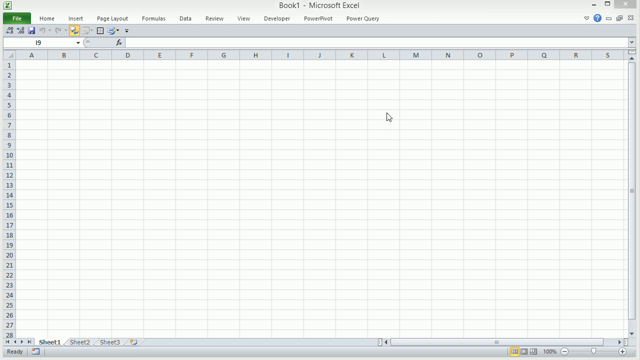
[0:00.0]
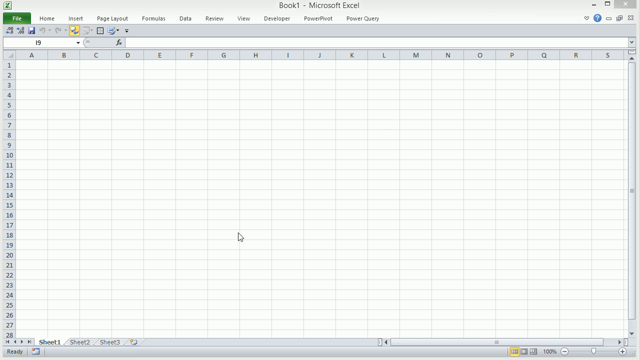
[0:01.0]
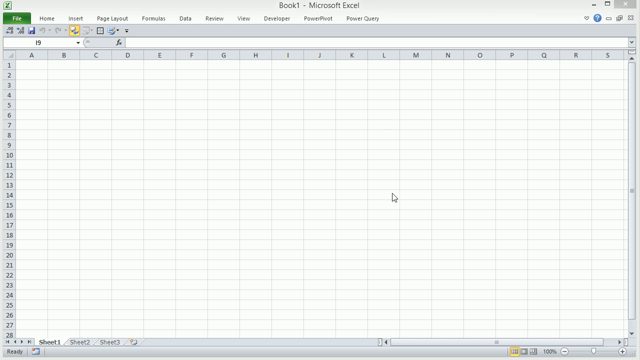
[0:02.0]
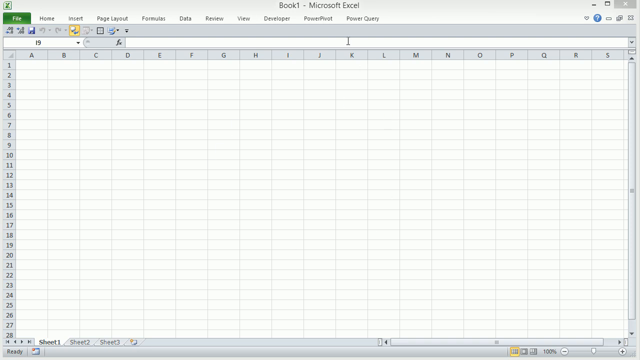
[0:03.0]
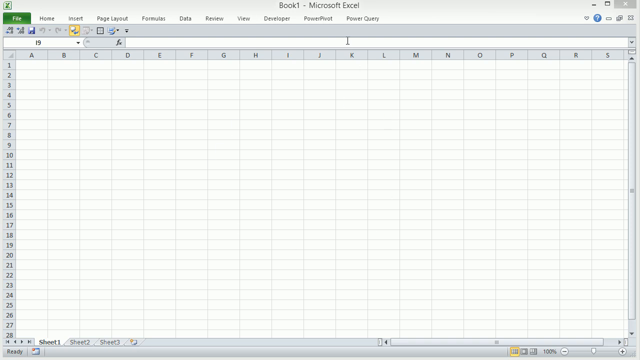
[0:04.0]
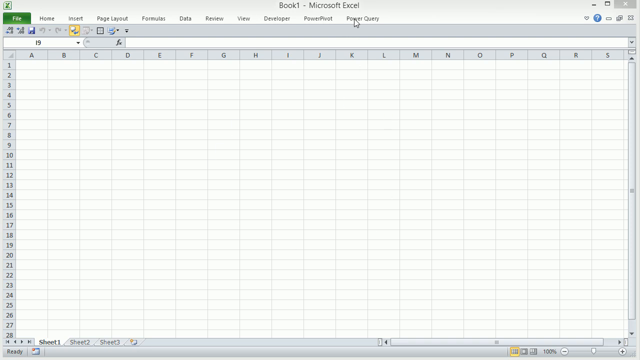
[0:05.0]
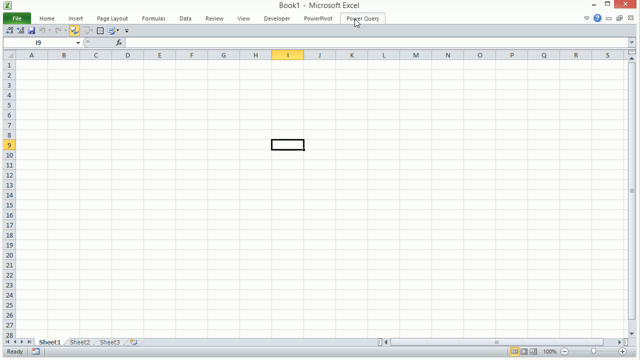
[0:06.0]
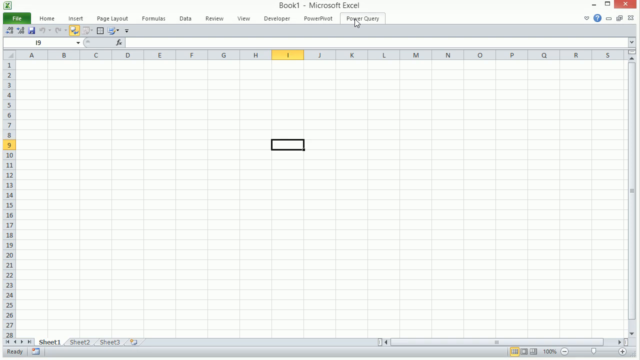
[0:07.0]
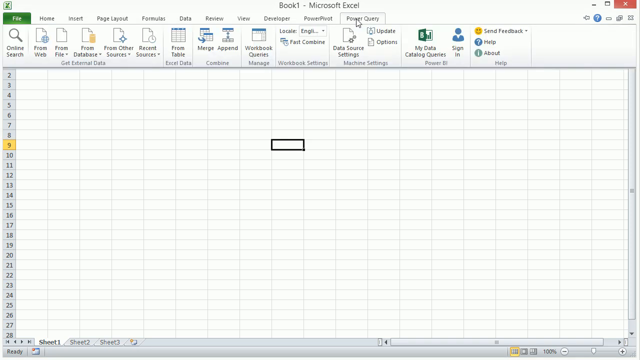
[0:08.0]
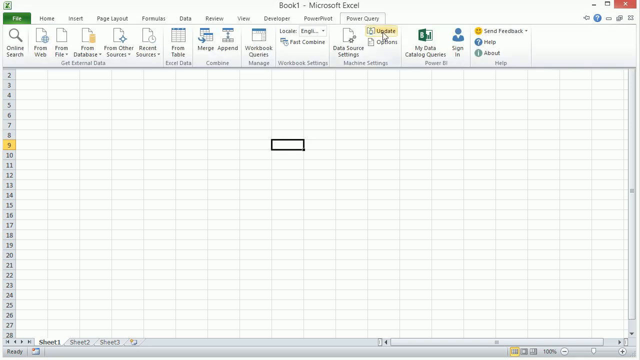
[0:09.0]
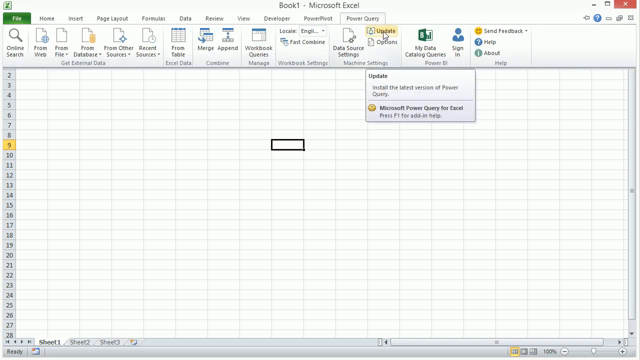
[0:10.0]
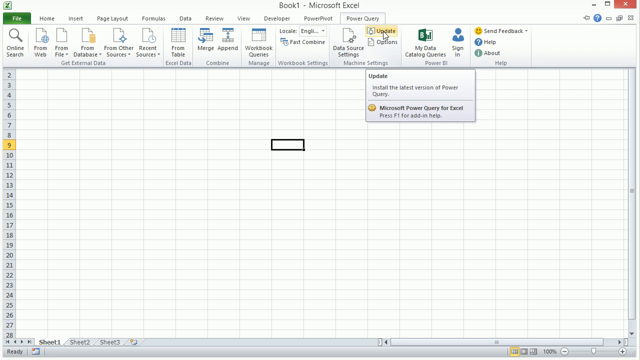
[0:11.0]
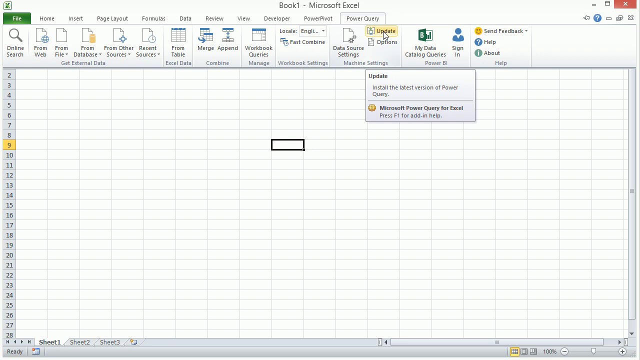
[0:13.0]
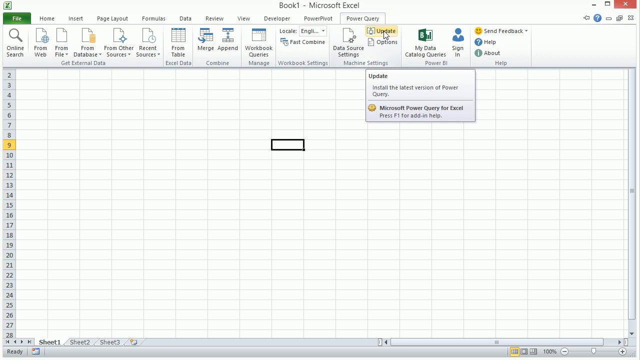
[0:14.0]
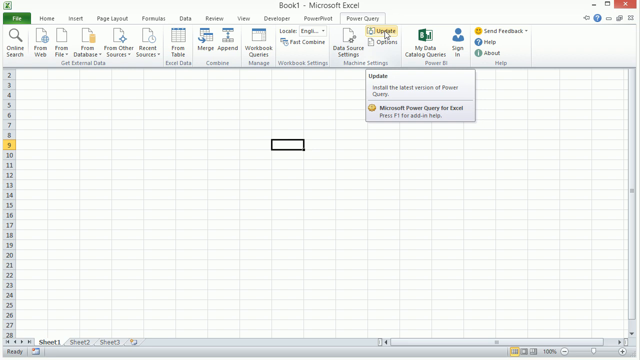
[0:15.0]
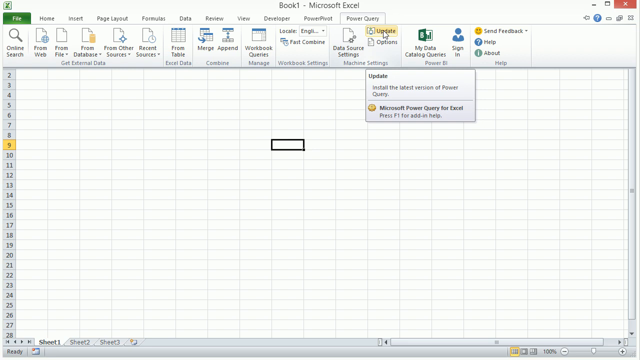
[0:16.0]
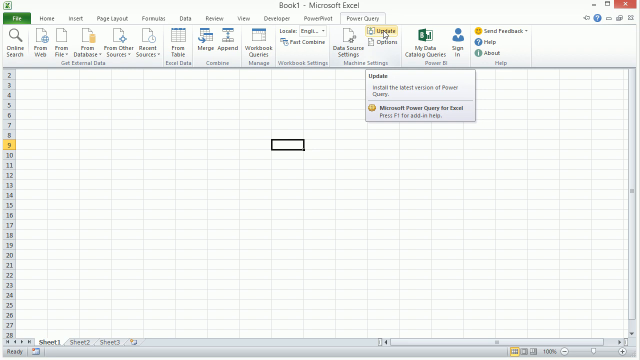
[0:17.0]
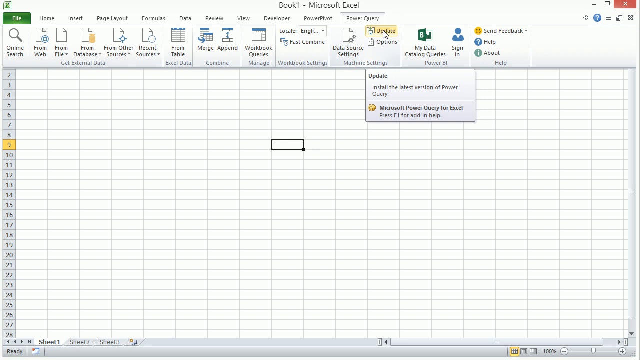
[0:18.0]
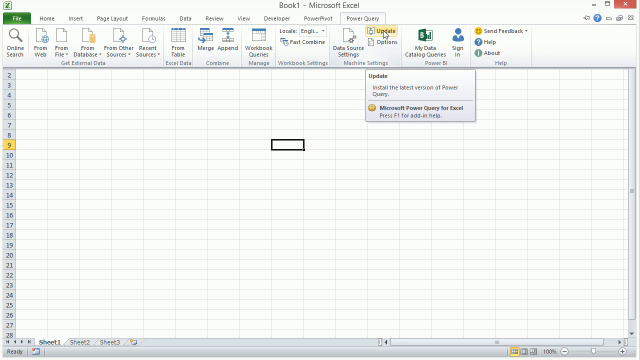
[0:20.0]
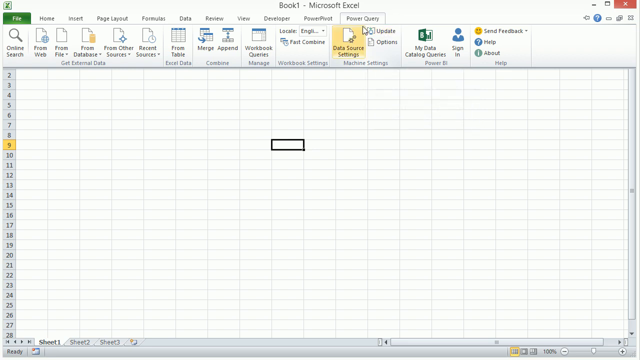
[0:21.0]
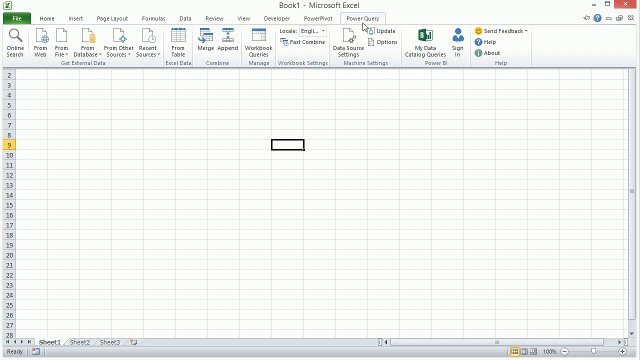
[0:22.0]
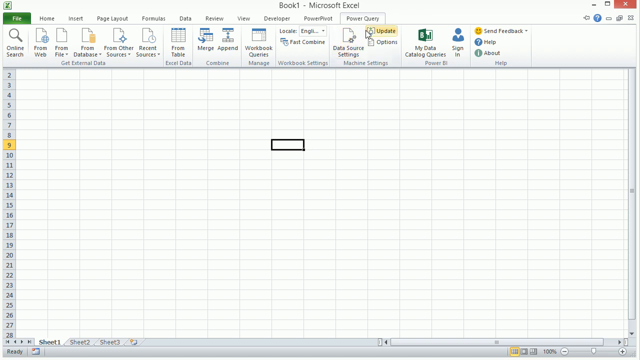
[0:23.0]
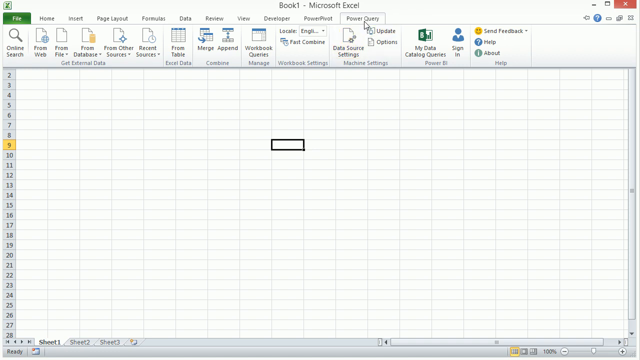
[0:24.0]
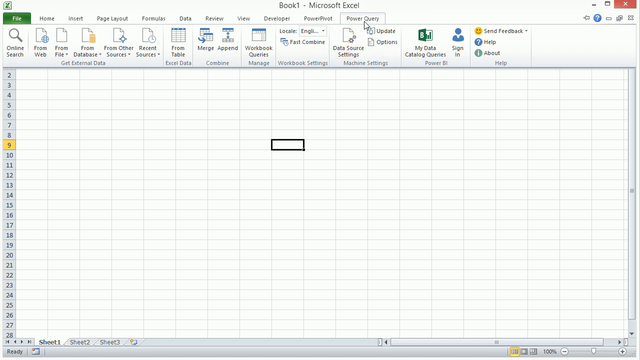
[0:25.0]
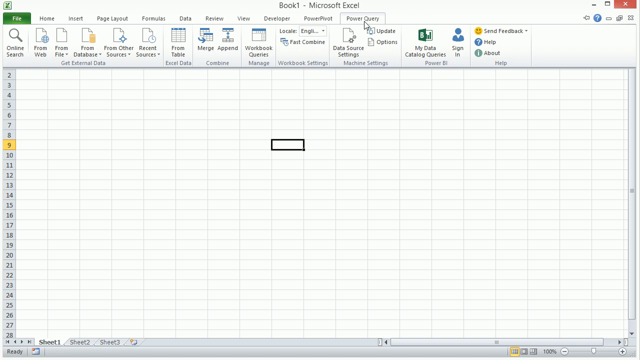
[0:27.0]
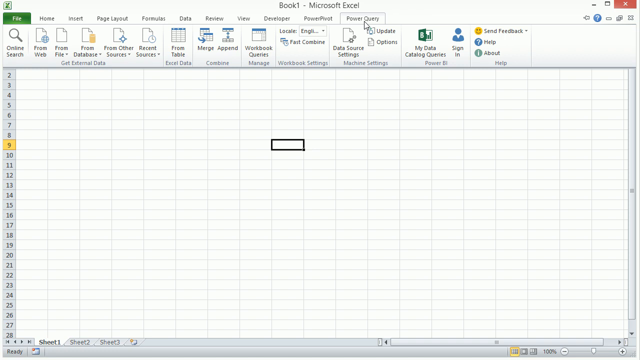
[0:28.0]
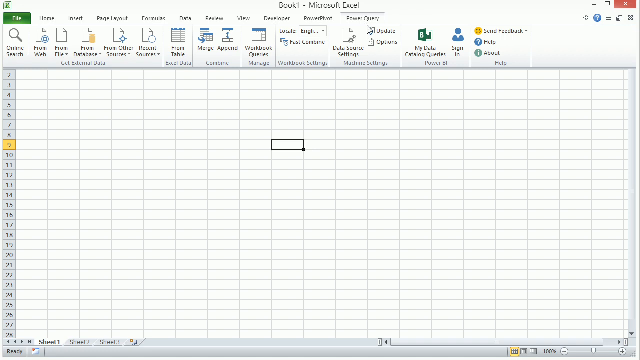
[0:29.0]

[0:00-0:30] A Microsoft Excel page is shown, apparently demonstrating the features or capabilities of Excel. The user goes to the Power Query tab and selects Update, then hovers over the options, seemingly to show what can be done with that tab, without doing anything else with it yet. Other tabs are visible along the top: File, Home, Insert, Page Layout, Formulas, Data, Review, View, Developer, PowerPoint, and Power Query, the one in use. The tabs have subgroups; under File there are Online Search, From Web, From File, From Database, From Other Sources, and Recent Sources. There is From Data with "Excel data" underneath it, followed by Merge and Apply, Workbook Queries, Fast Combine, Data Source Settings, Update and Options, My Data Catalog Queries, Sign In, Send Feedback, Help, and About.